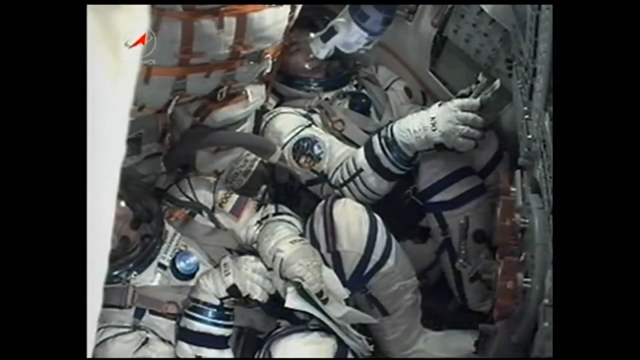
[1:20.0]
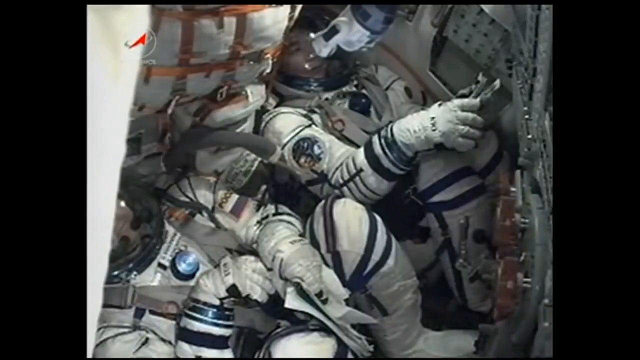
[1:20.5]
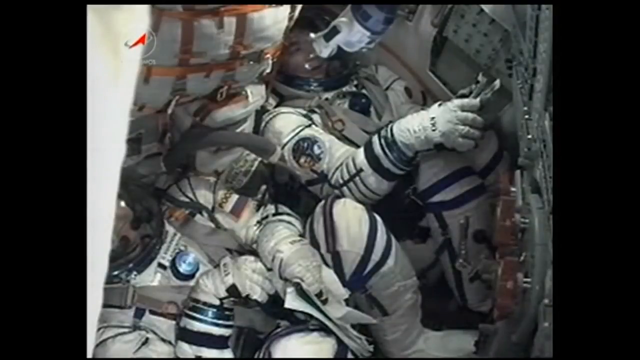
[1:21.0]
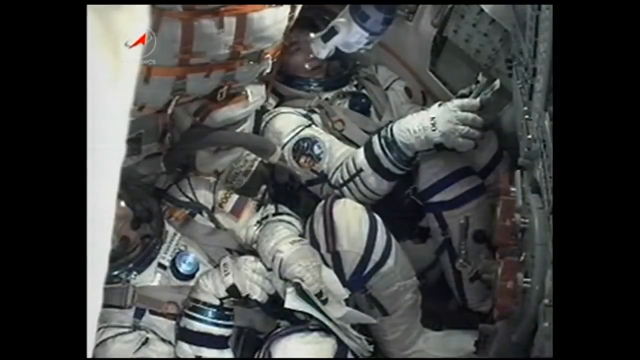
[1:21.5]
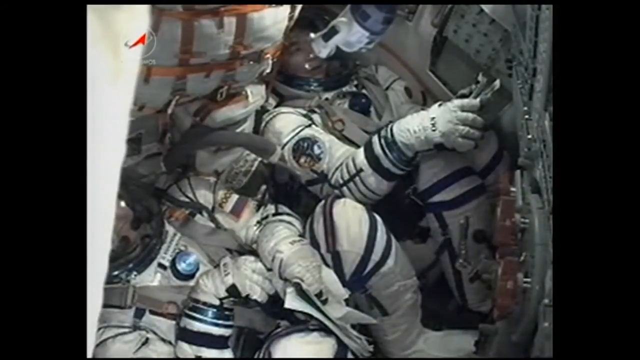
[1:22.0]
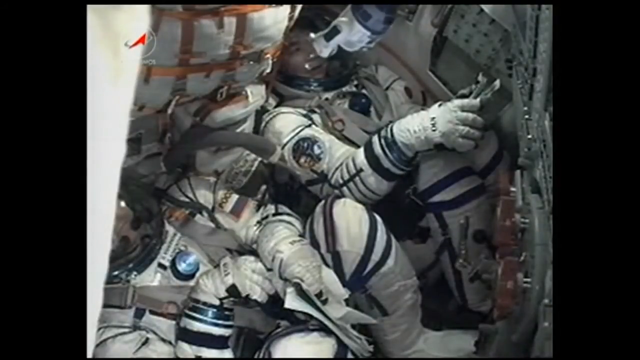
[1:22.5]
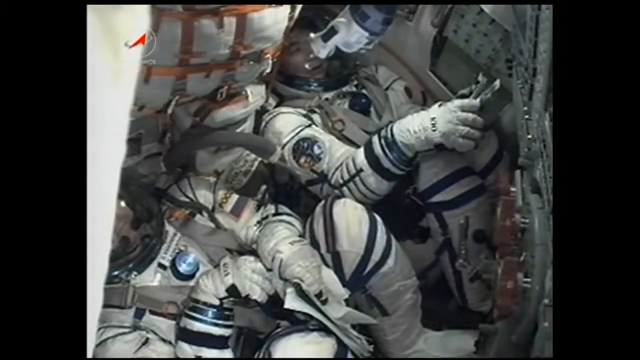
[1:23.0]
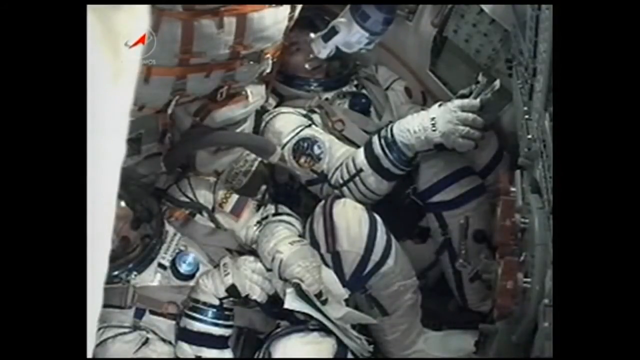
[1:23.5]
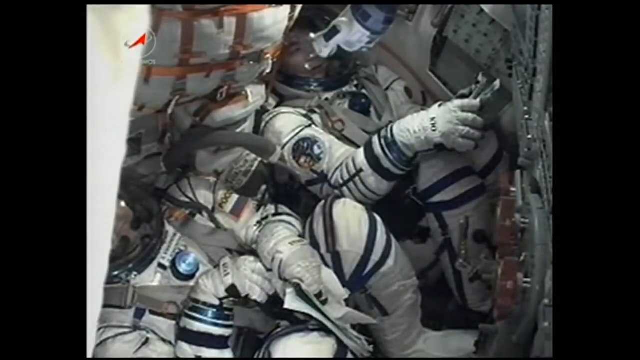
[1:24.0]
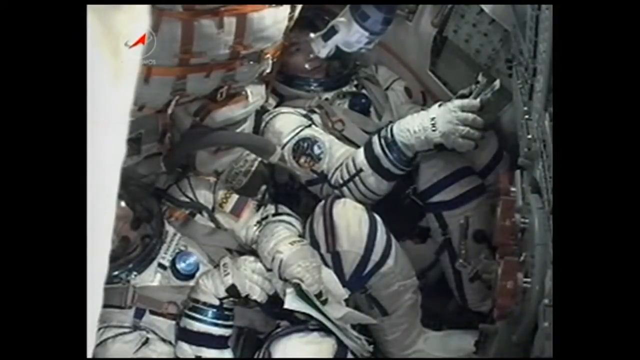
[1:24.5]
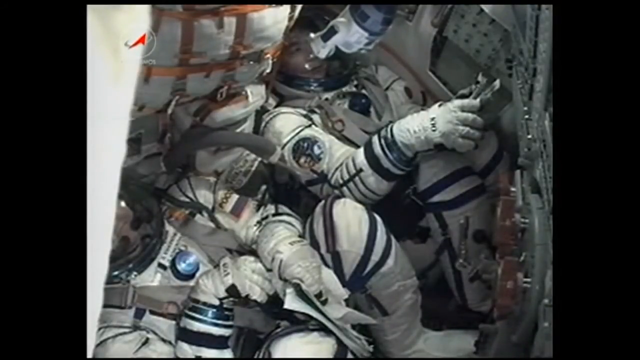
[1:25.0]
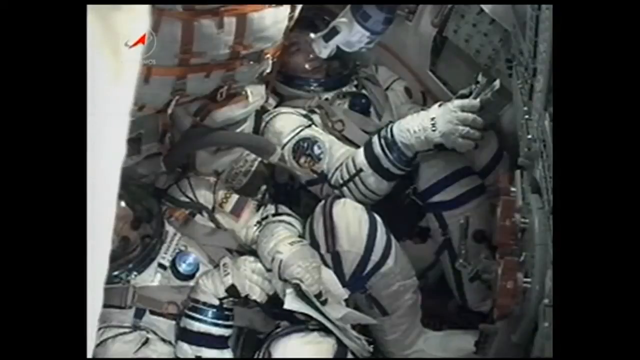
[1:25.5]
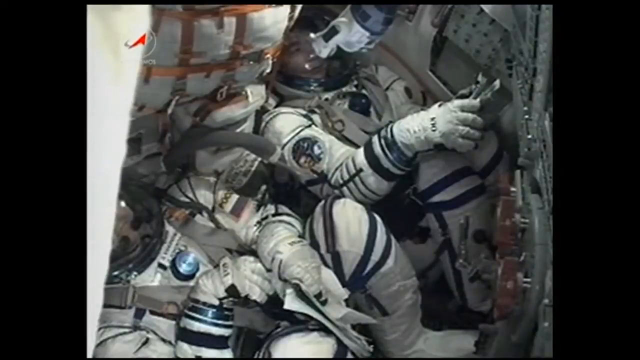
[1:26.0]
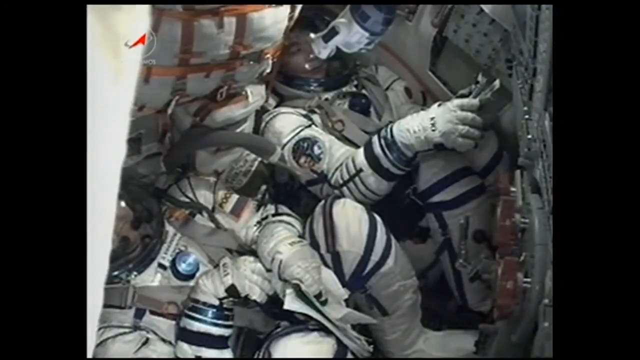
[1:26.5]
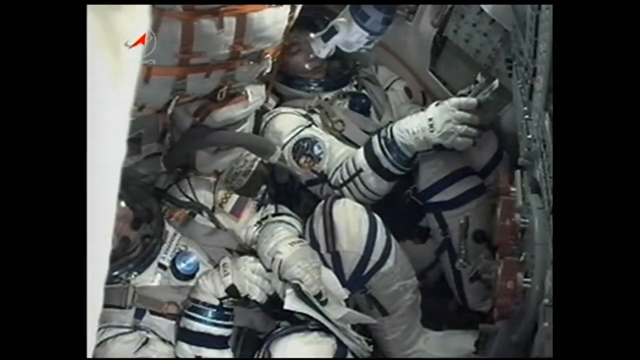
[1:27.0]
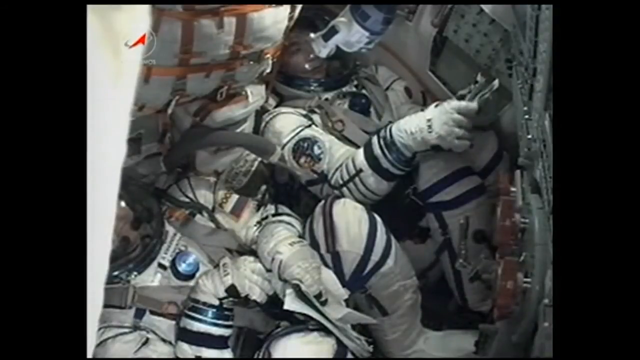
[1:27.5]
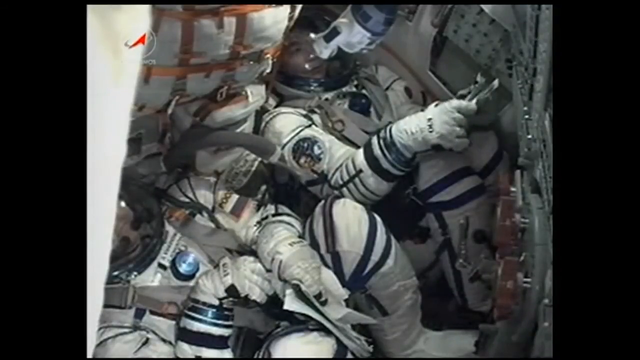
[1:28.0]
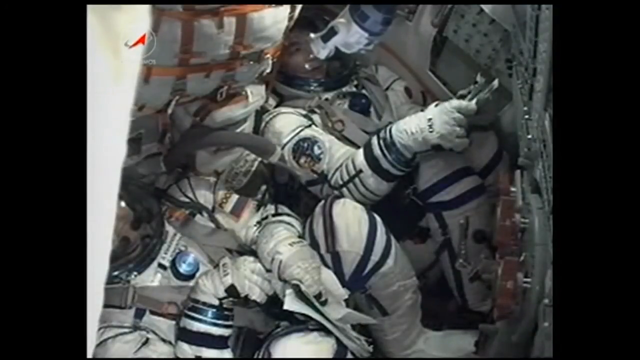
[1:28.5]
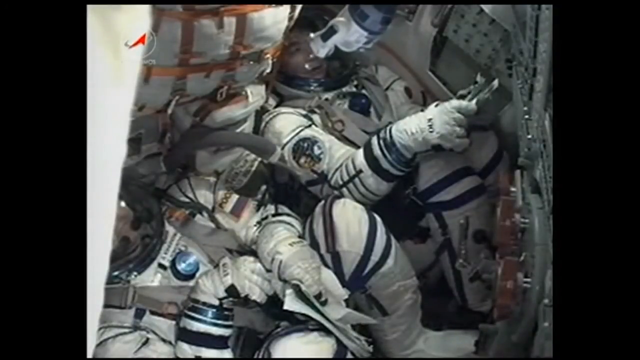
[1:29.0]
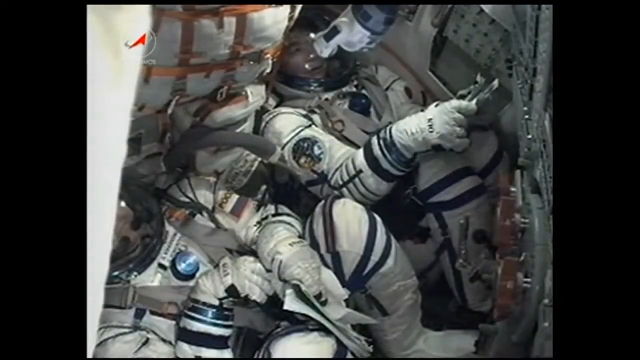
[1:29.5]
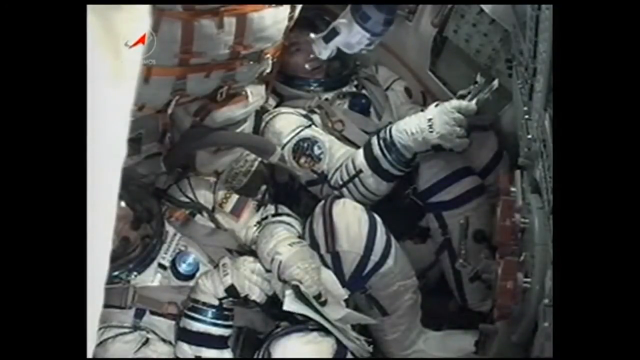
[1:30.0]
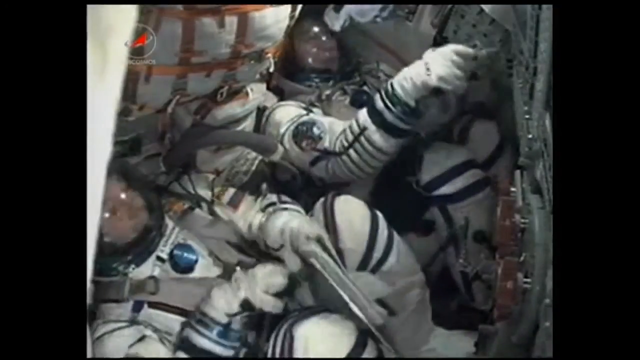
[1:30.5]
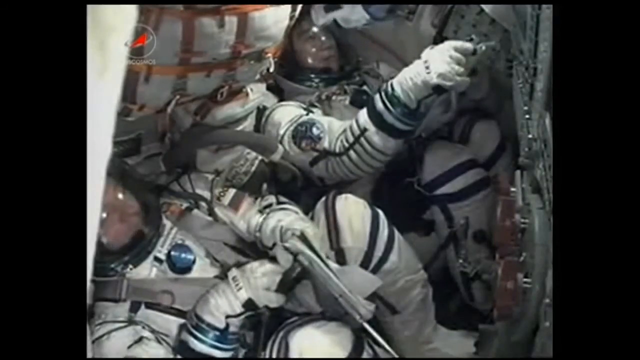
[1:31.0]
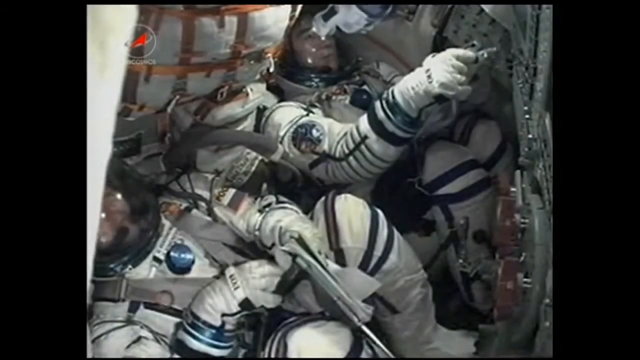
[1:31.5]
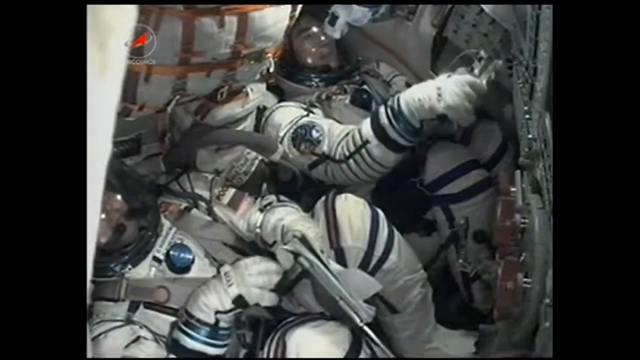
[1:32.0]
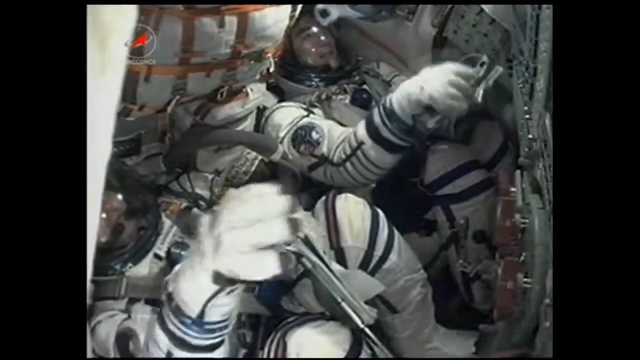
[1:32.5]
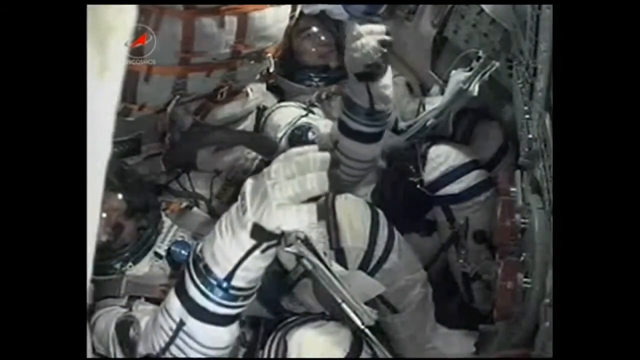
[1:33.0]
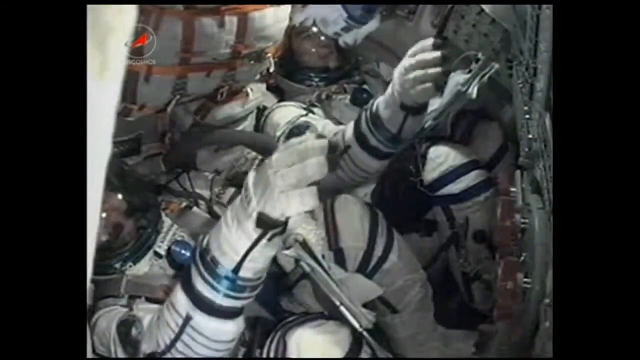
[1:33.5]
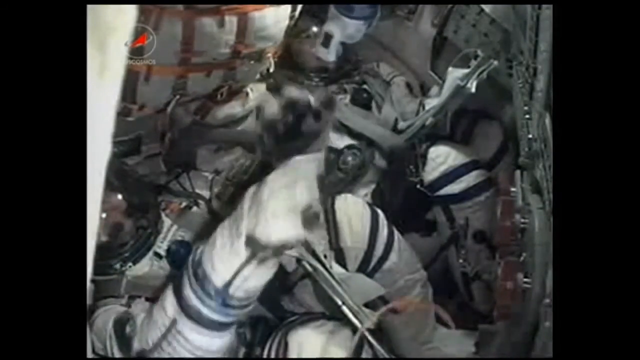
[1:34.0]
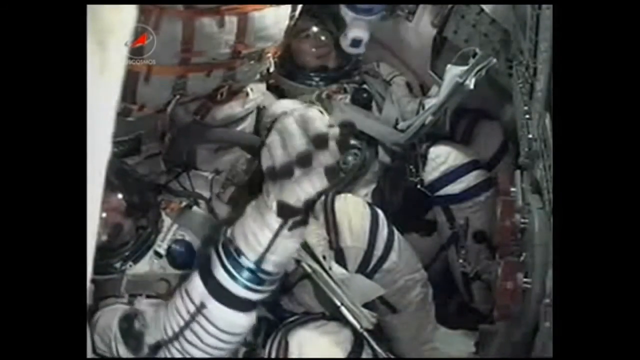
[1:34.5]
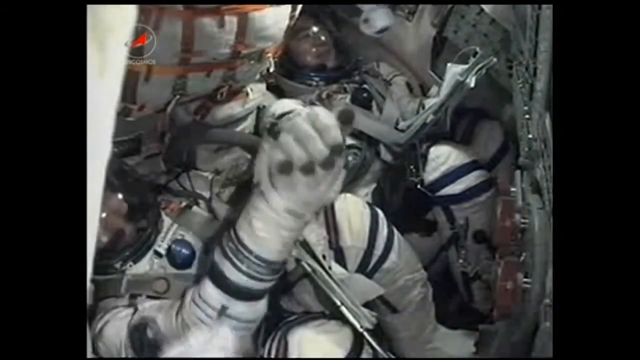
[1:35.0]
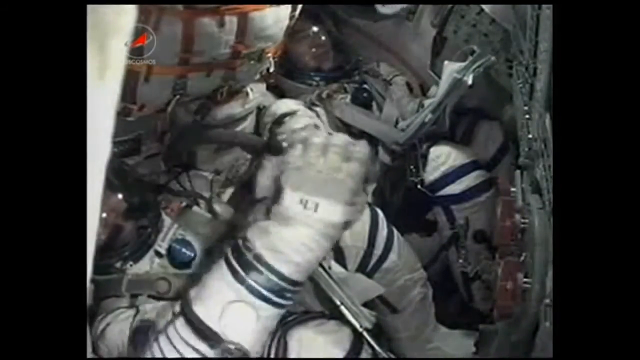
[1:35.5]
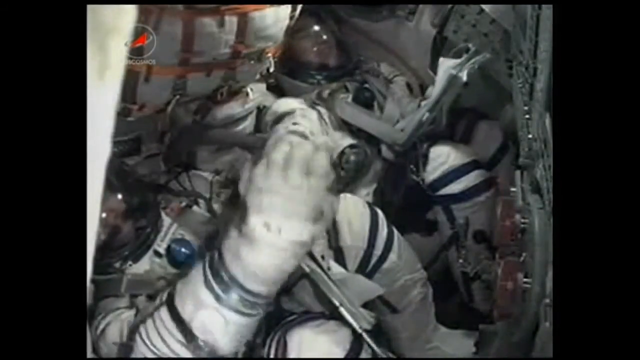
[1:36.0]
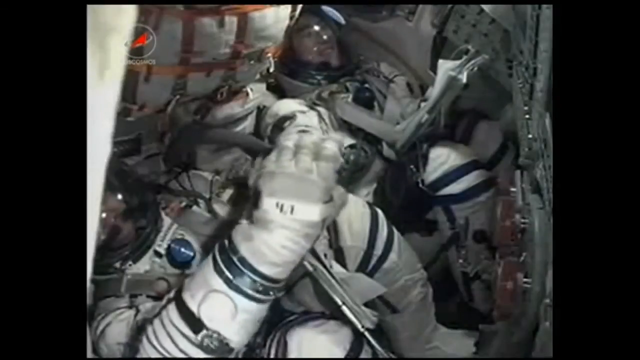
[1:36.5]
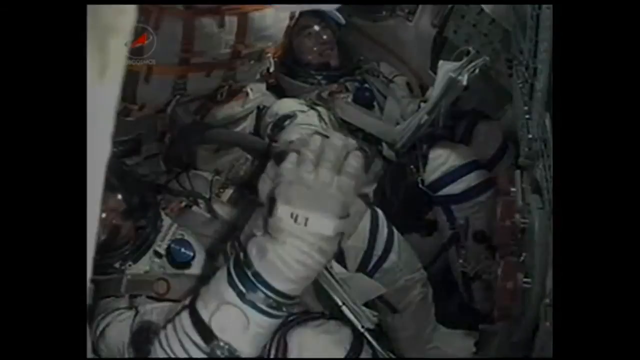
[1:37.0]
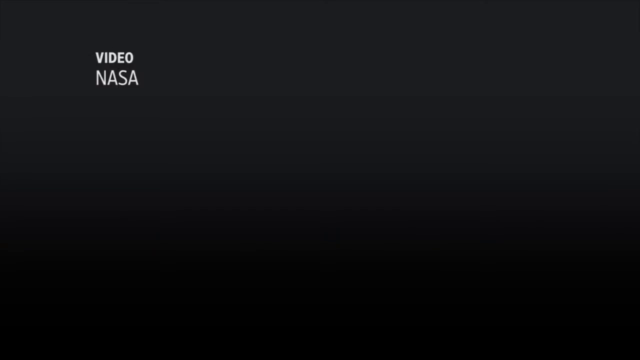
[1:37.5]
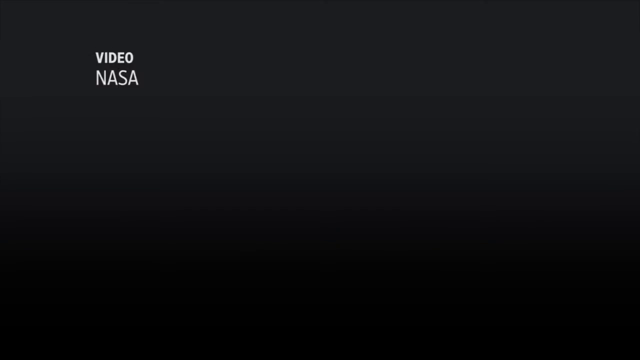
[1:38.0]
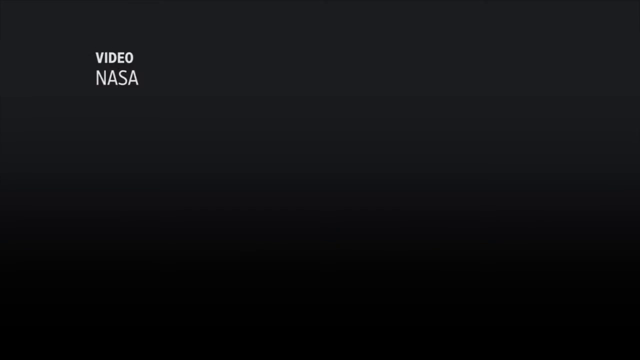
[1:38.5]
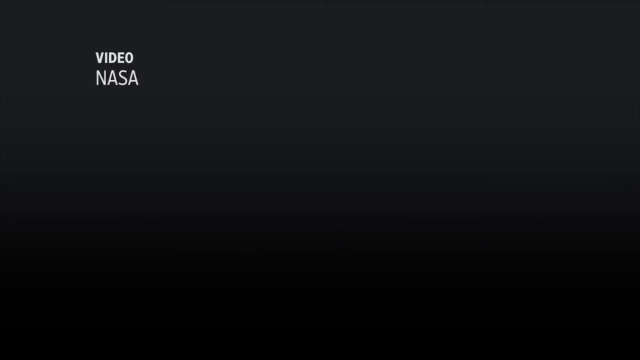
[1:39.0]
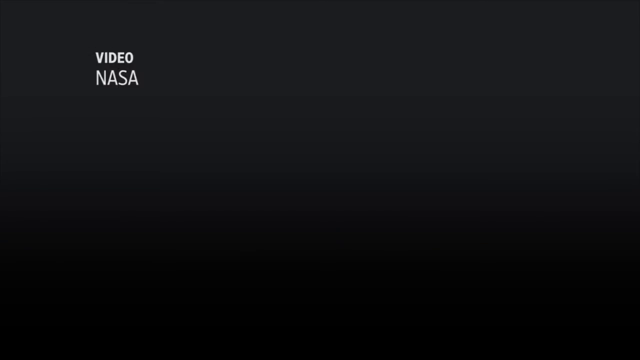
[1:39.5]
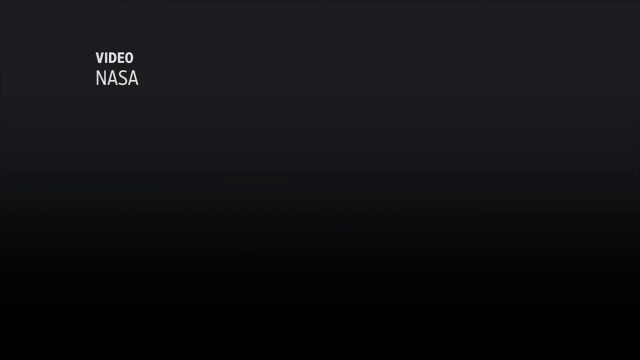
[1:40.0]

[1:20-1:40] Inside the very cramped space of the rocket, various bits of equipment are attached to the interior. Two spacemen are seated, wearing full spacesuits, gloves, helmets and outerwear, with badges on the sides of their uniforms. Some floating devices are held with ropes to keep them from floating around the cabin. One man appears to be holding a manual, and the other appears to be possibly operating a control. Suddenly the rocket jolts sharply, shunting both men around. The two men then shake hands, both using their left hands, and smile. The video finishes with "NASA" in white lettering against an all-black background.